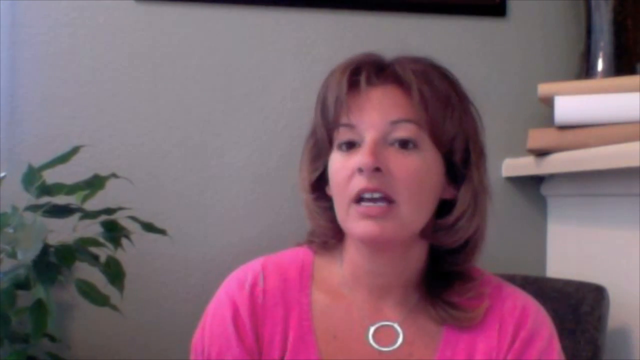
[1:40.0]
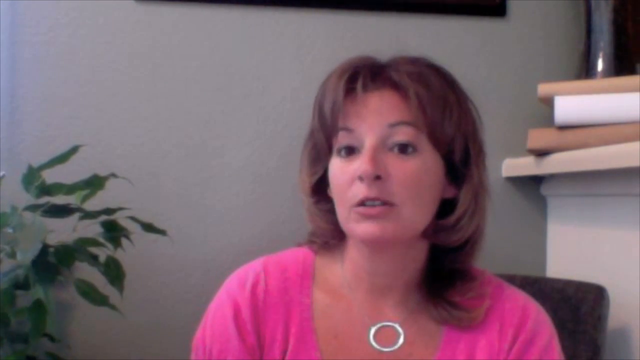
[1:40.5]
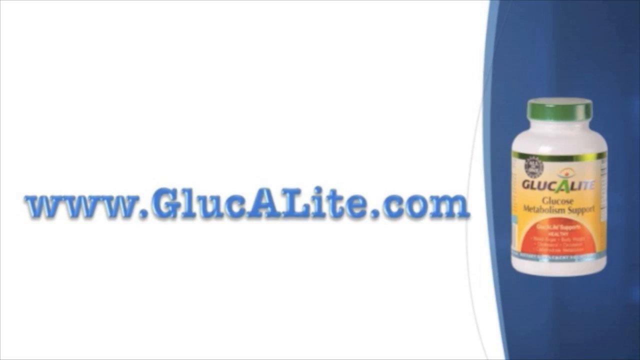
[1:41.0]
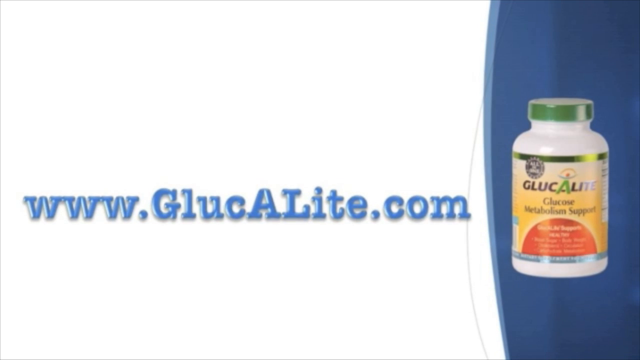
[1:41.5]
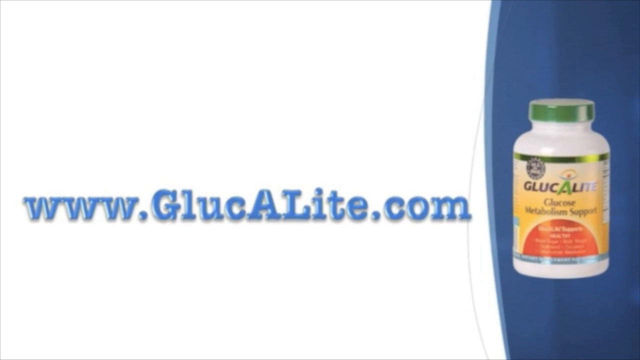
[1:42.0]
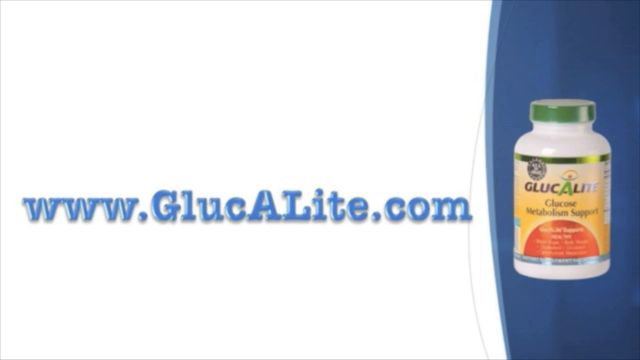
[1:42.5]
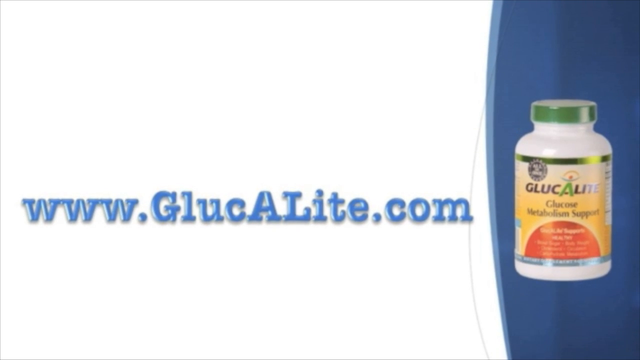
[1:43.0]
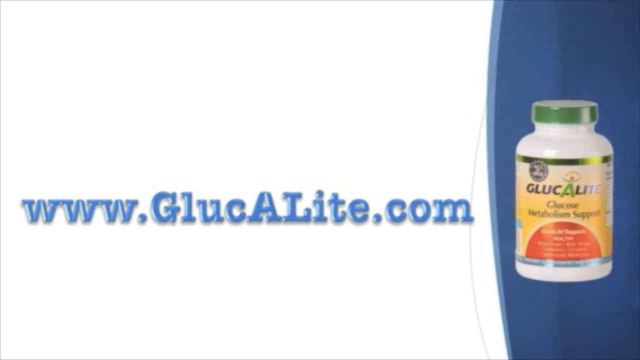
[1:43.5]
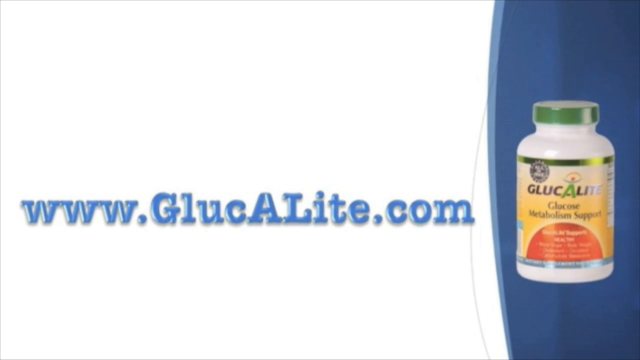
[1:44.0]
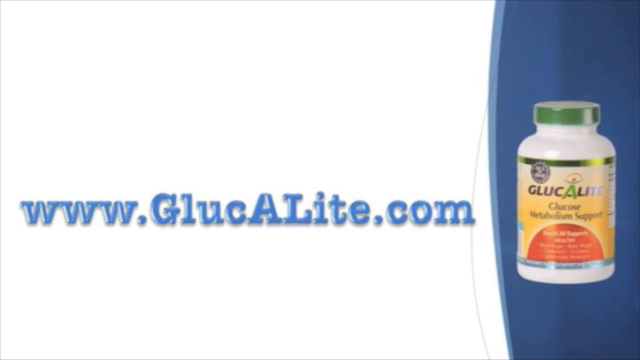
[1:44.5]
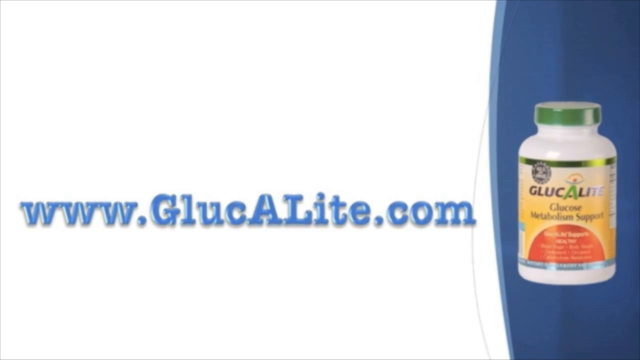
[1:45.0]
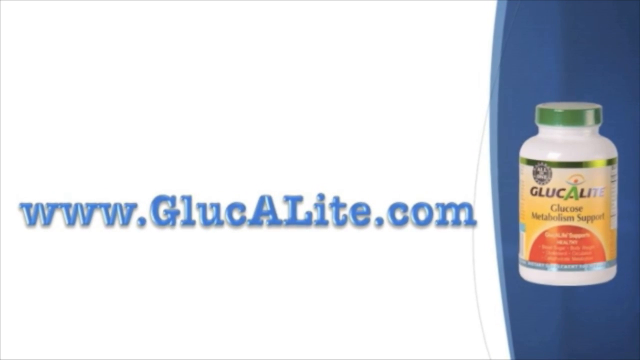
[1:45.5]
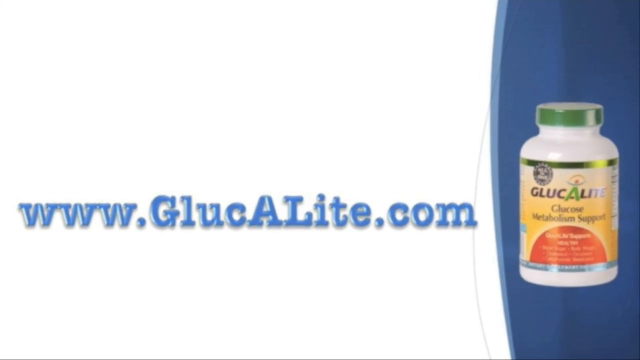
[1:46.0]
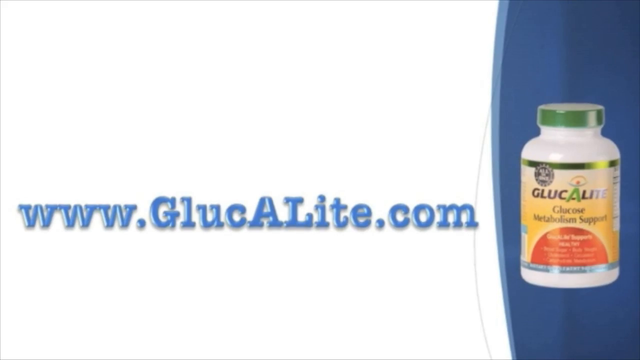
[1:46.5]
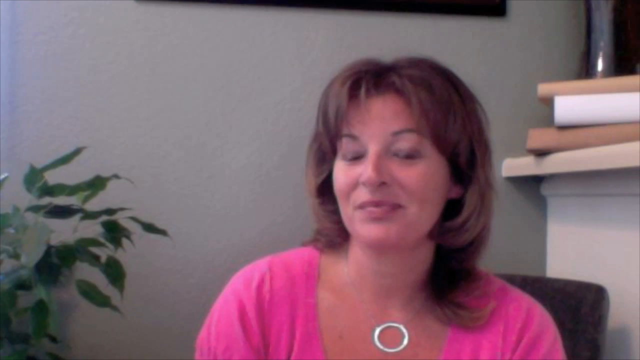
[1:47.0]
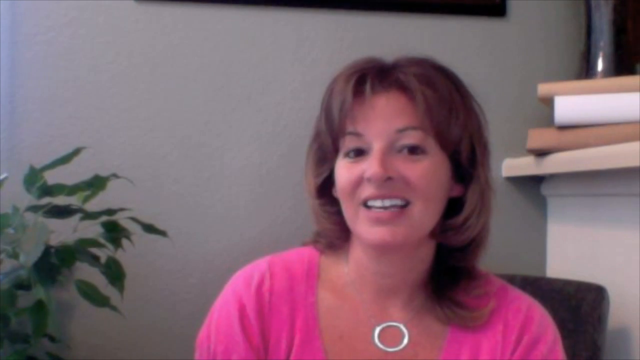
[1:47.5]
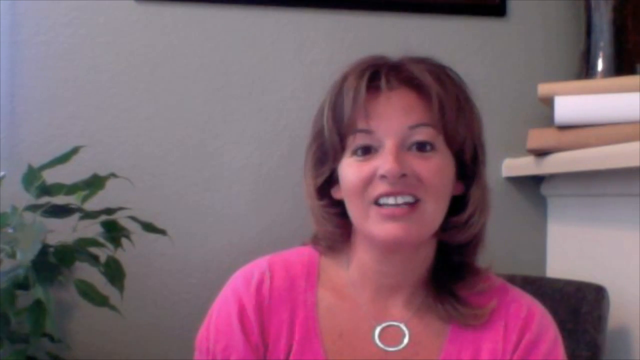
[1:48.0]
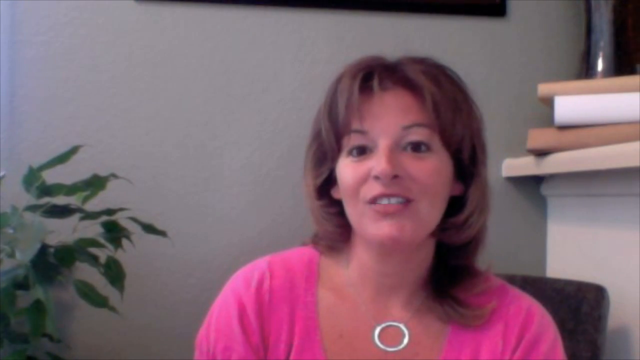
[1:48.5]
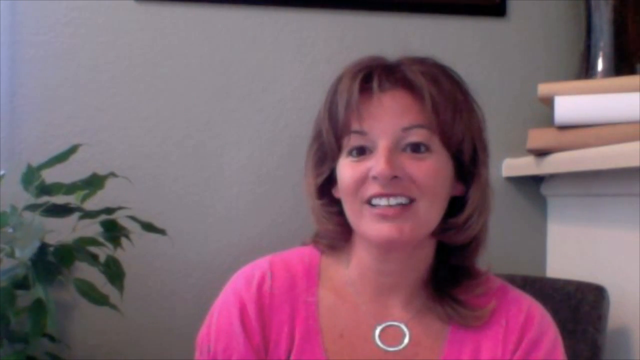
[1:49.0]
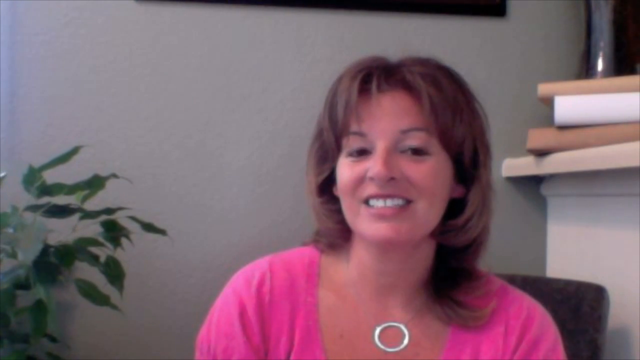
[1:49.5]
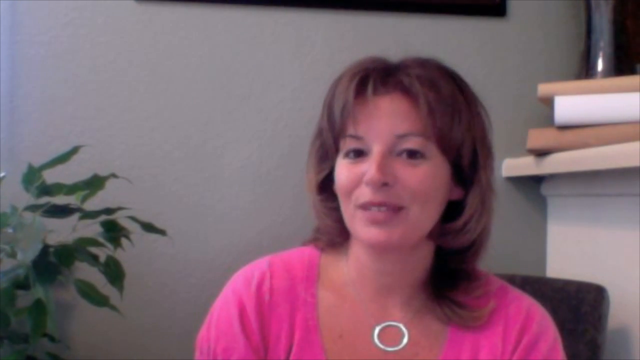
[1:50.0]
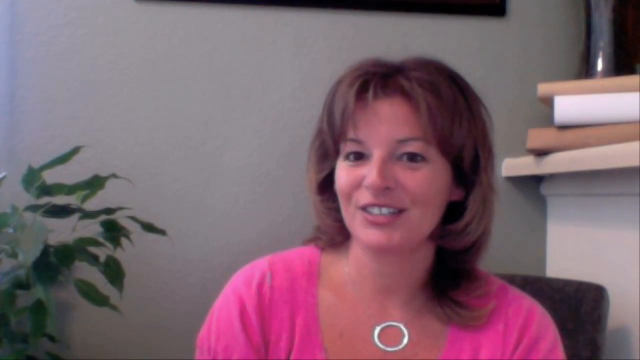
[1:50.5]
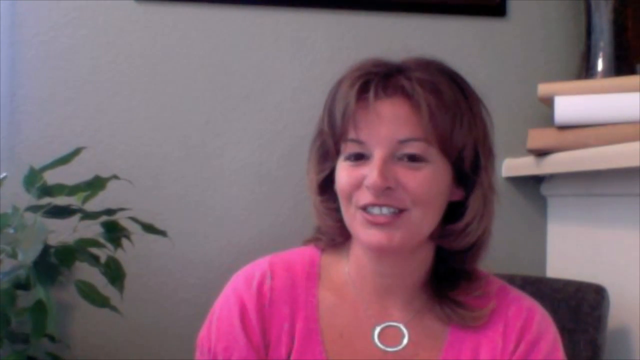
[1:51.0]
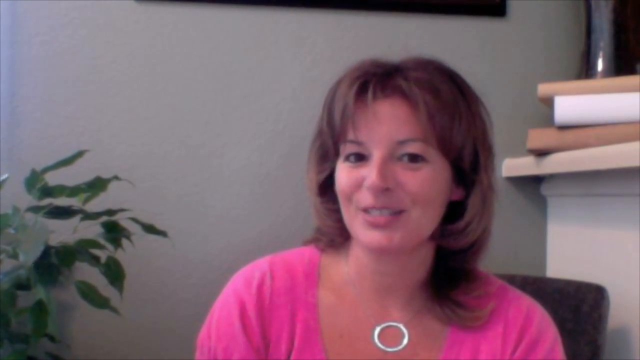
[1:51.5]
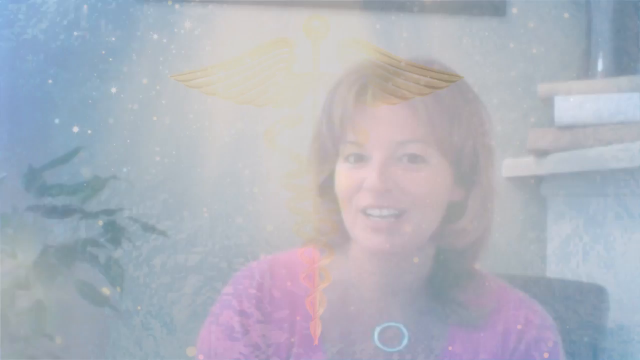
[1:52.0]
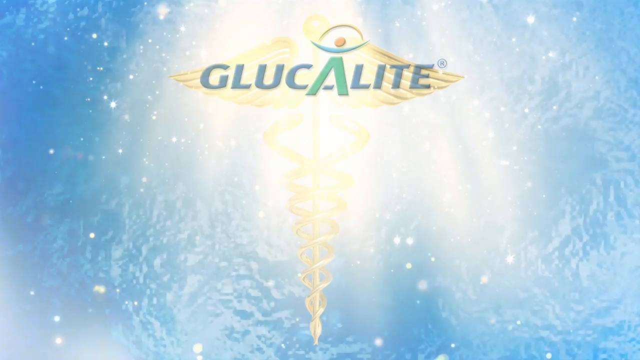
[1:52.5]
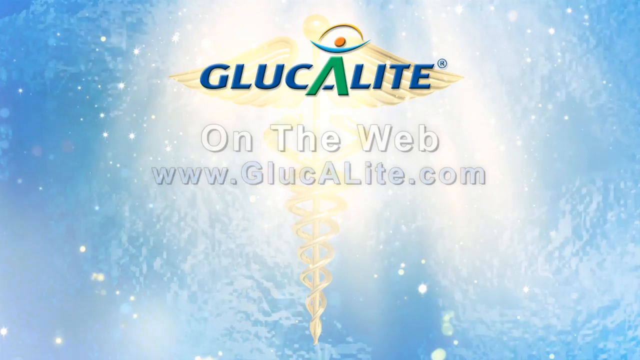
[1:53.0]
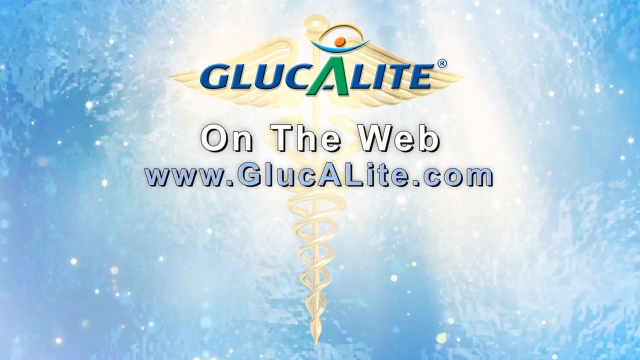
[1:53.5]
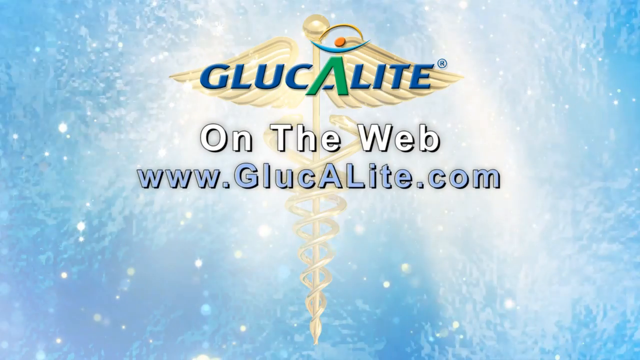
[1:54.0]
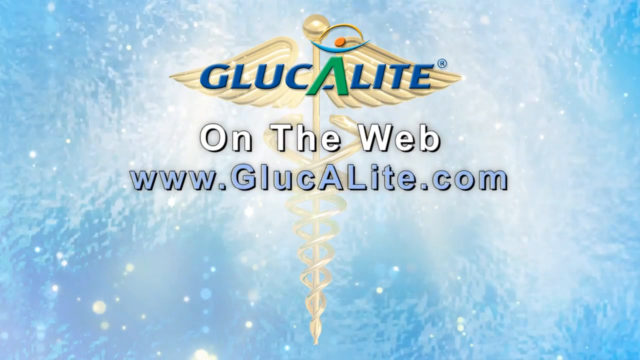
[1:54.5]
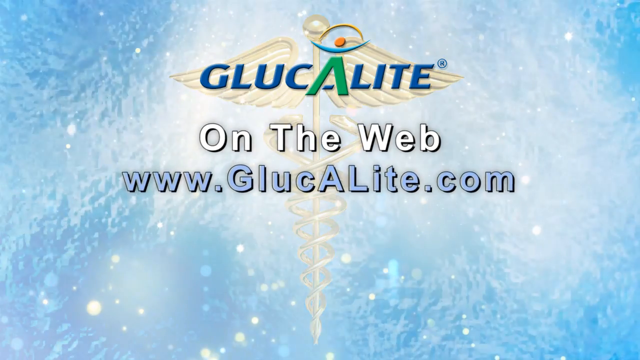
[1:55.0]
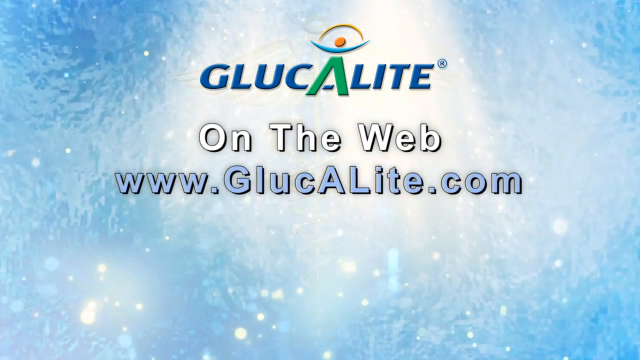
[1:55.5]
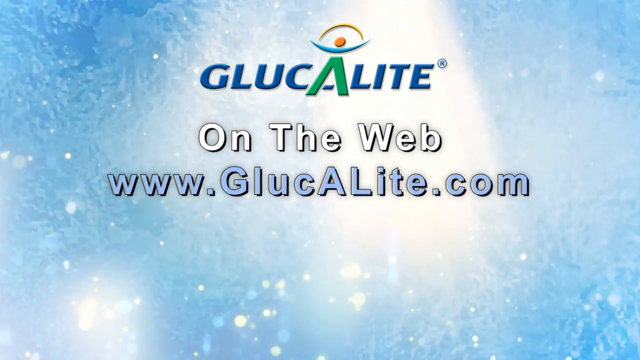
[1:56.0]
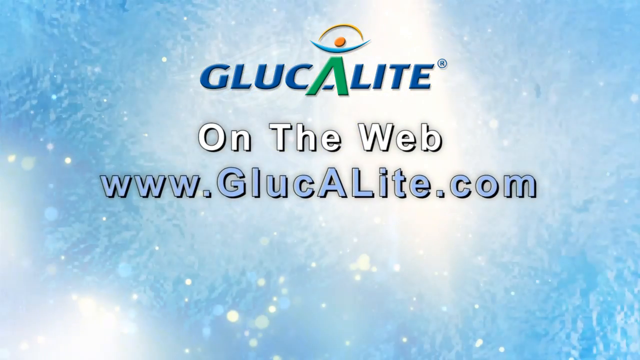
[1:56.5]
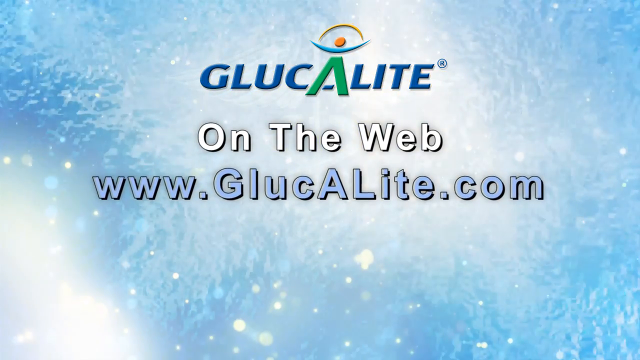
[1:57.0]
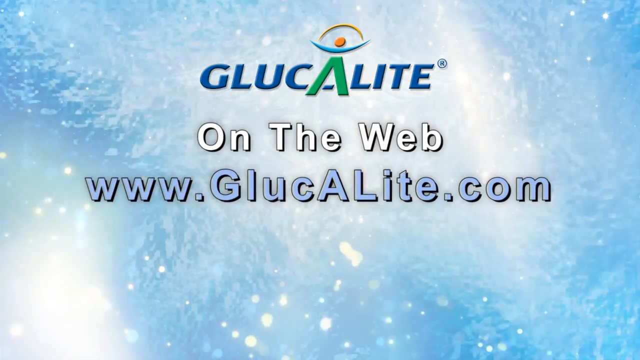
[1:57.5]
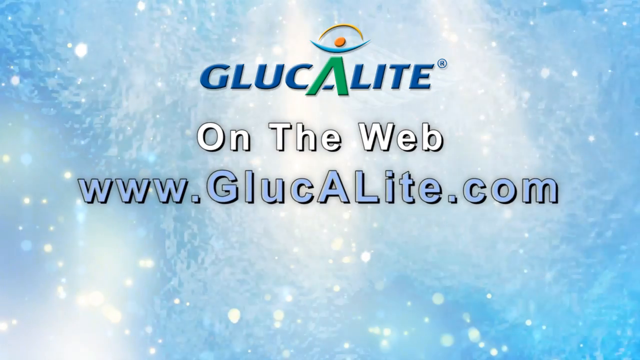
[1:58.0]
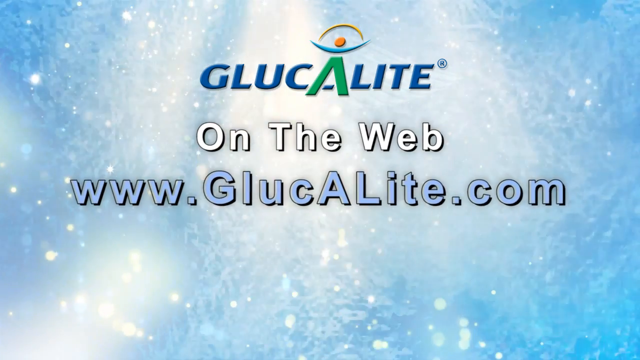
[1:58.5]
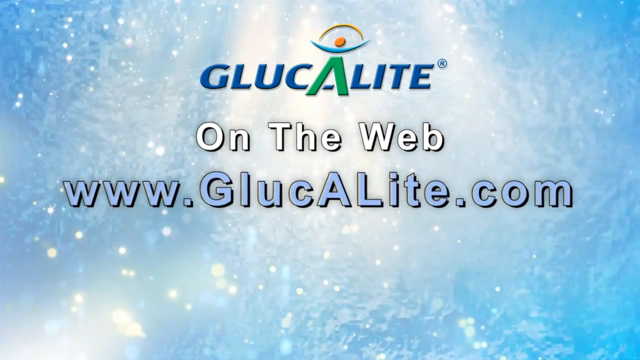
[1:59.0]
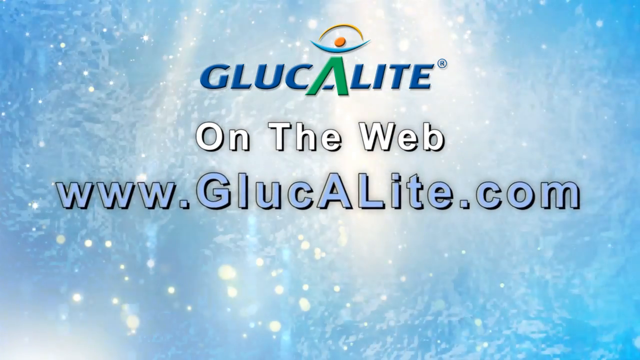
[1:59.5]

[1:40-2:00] The woman is sitting in front of a white mantel or bookcase holding brown, white and brown books and possibly a vase. The plant on her left keeps moving, and a picture frame is in the background against a light green wall. Then a screen appears where the right-hand quarter is arced in; the left side is white and that fourth is blue. On the left, blue letters read "www.glucolate.com," and on the right, over the blue, is a bottle of Glucolate. It goes back to the fair-skinned, brown-haired woman in the pink shirt with a circular pendant, talking to the camera. The view then pans away to a beam of light glistening in the background, and the Glucolate logo appears: everything is in blue font except the A, which is green and forms the legs of a sort of stick figure, with blue arms shaped somewhat like a smile, a dot above, and a yellow semicircle or arc running from each end of the blue arc. The text "on the web at www.glucolate.com" appears, and the website looks like it is growing toward the viewer.